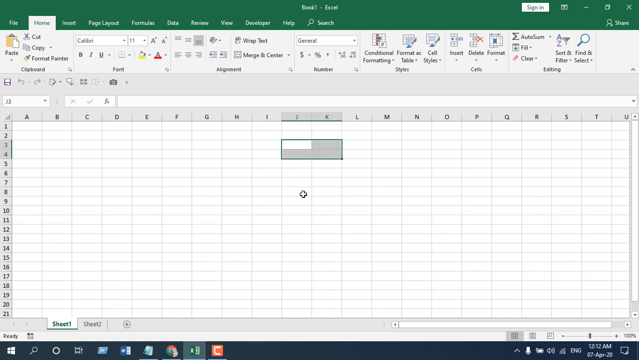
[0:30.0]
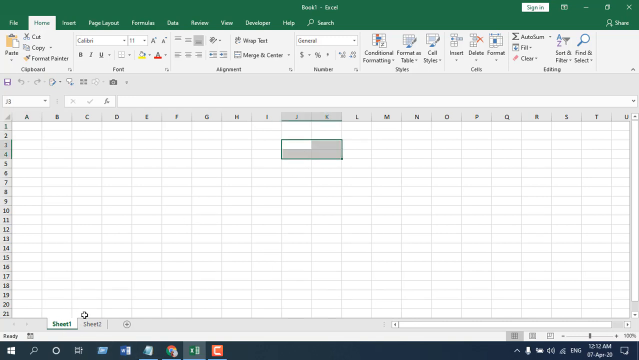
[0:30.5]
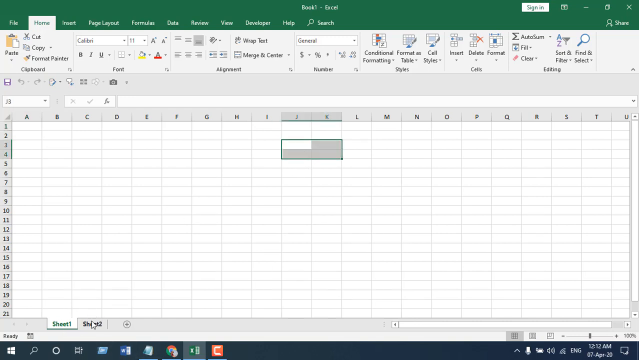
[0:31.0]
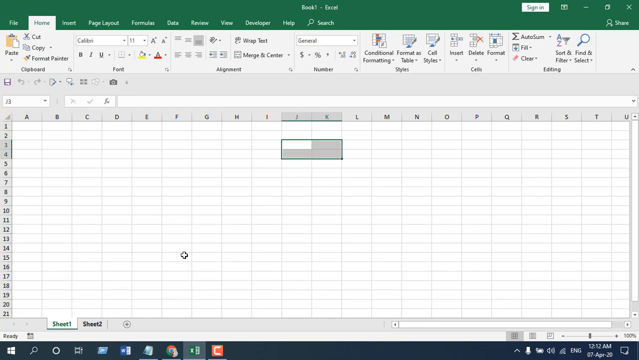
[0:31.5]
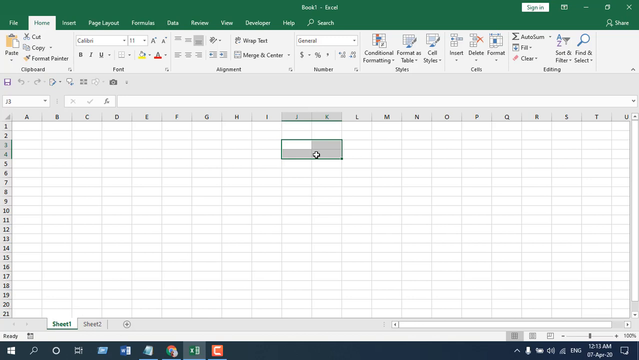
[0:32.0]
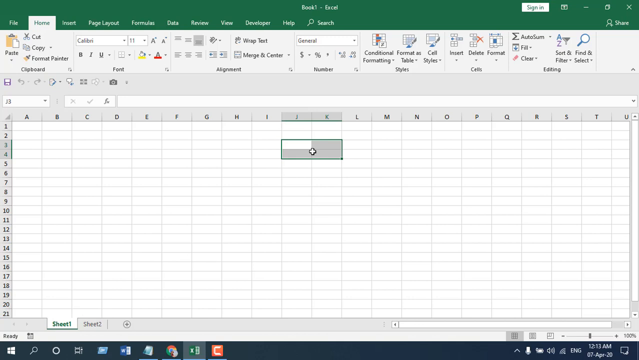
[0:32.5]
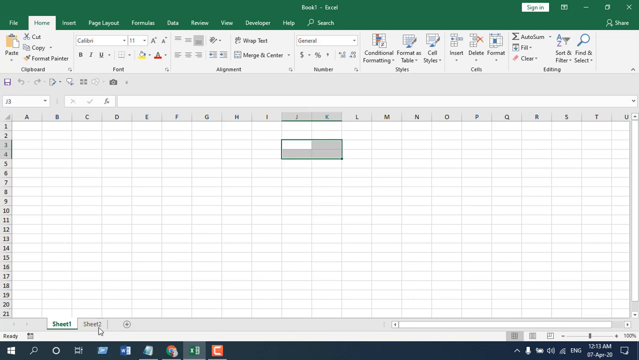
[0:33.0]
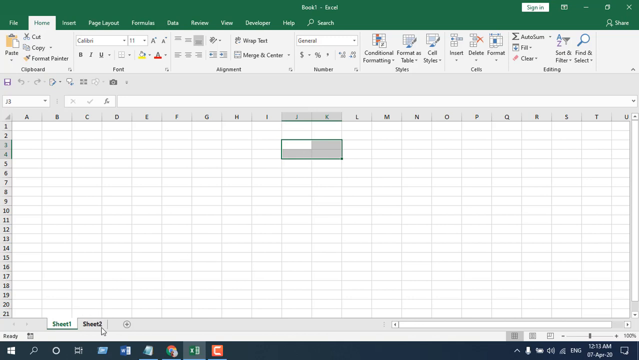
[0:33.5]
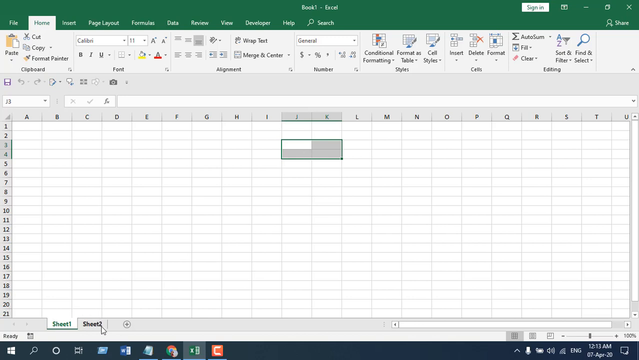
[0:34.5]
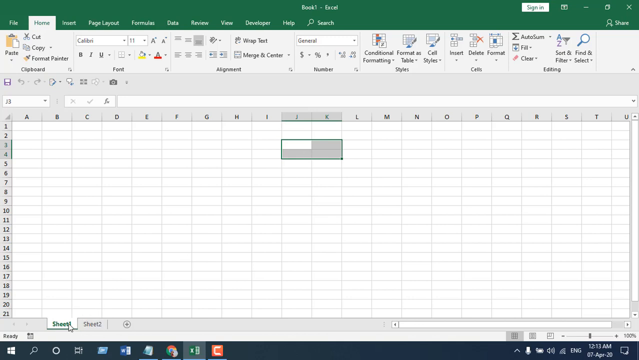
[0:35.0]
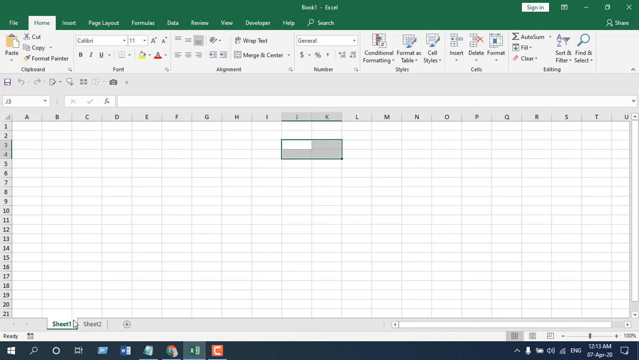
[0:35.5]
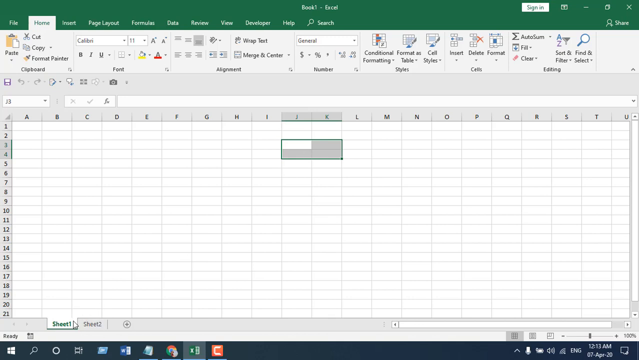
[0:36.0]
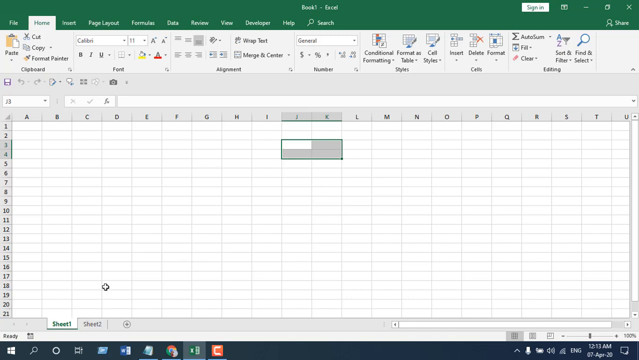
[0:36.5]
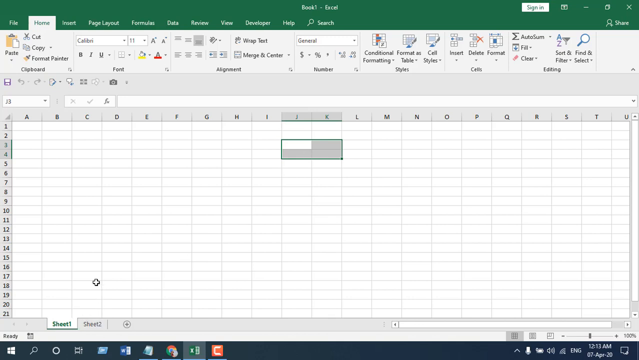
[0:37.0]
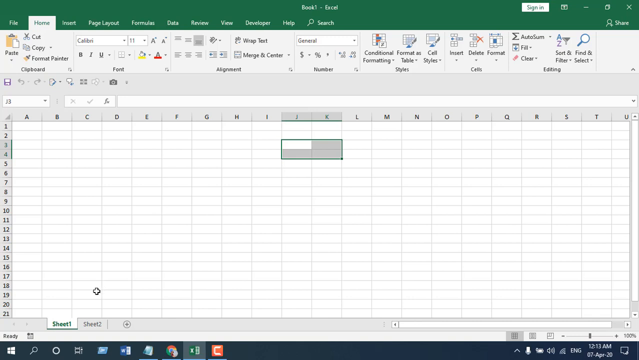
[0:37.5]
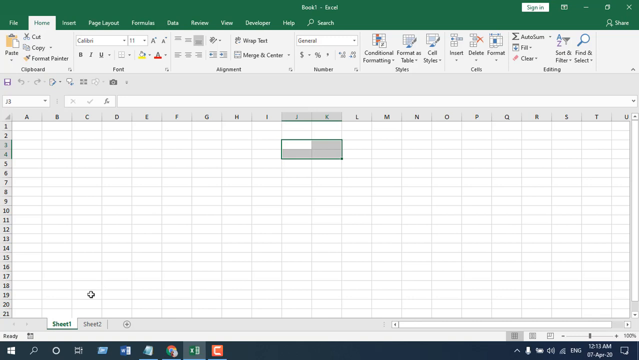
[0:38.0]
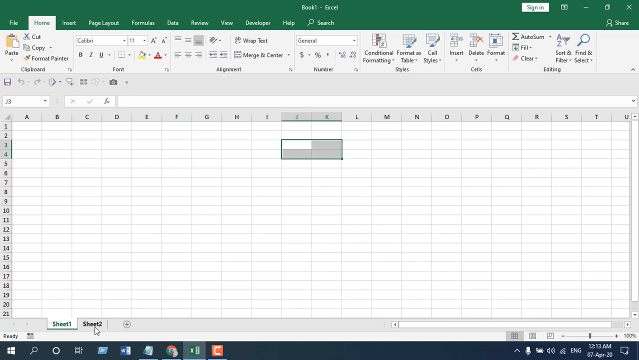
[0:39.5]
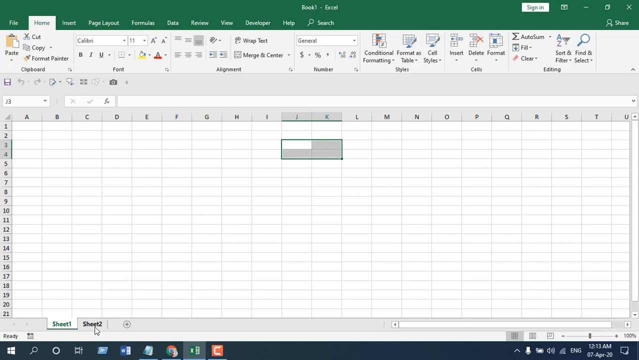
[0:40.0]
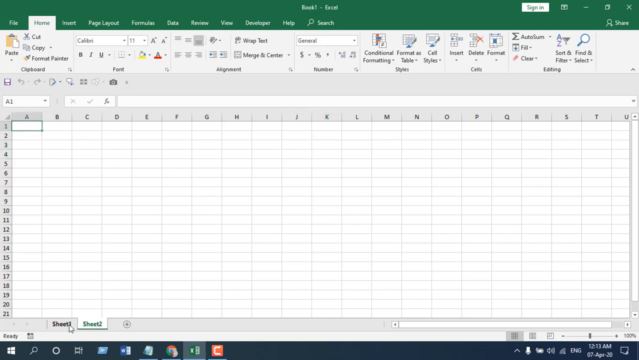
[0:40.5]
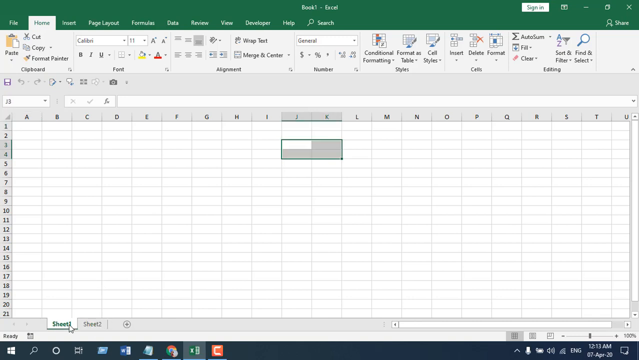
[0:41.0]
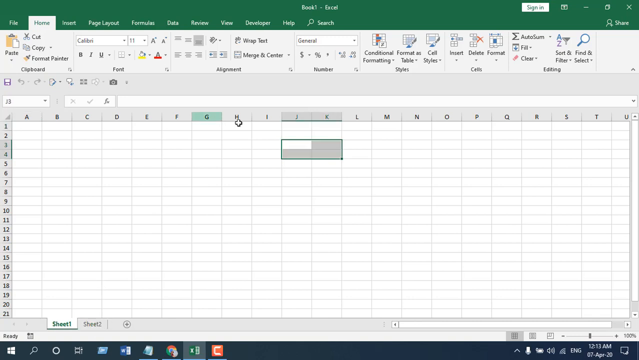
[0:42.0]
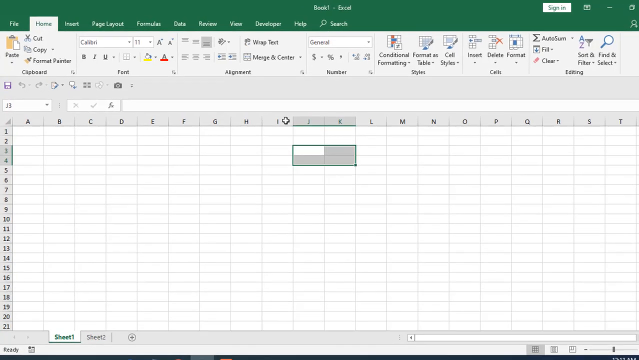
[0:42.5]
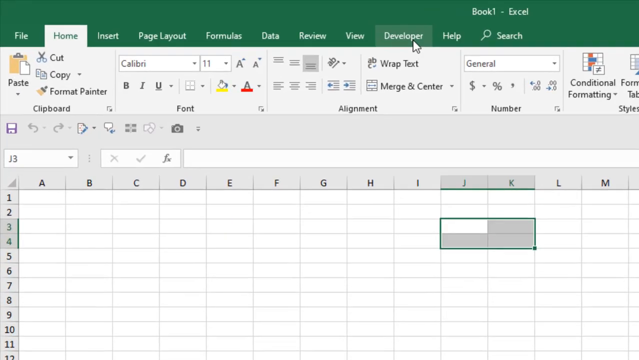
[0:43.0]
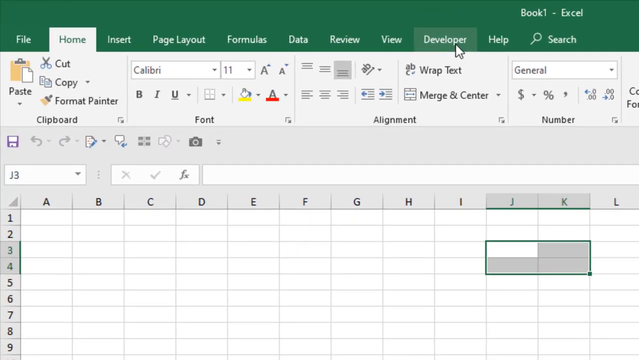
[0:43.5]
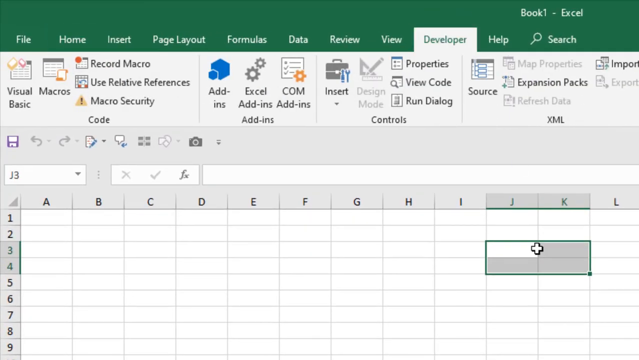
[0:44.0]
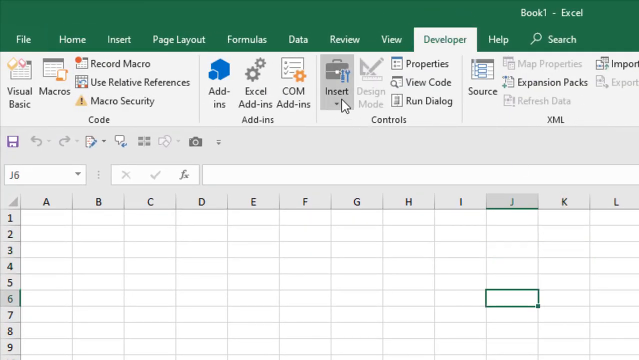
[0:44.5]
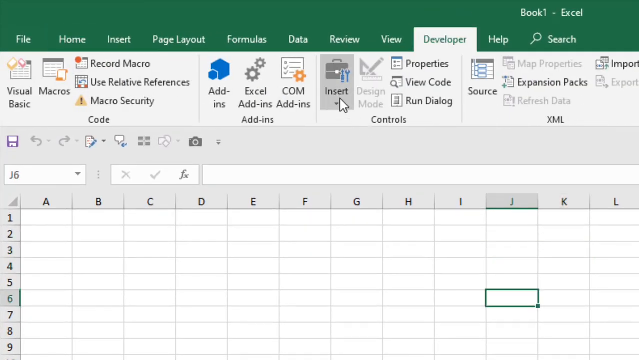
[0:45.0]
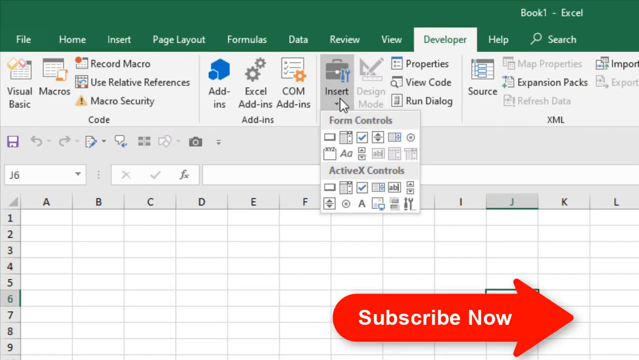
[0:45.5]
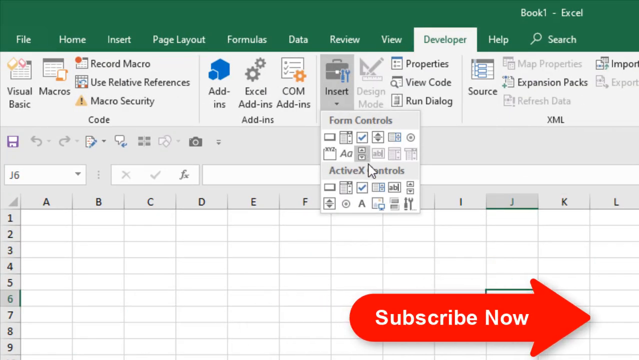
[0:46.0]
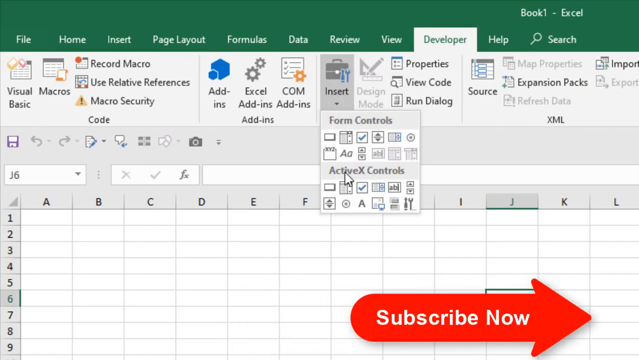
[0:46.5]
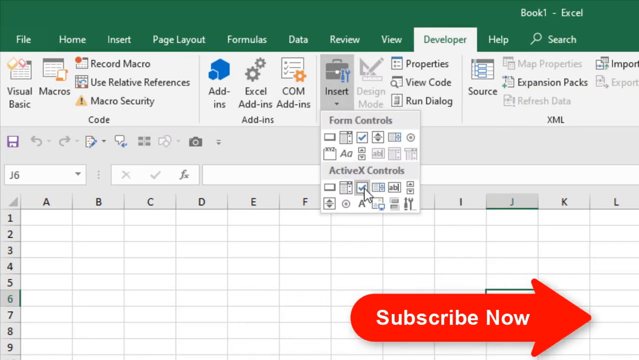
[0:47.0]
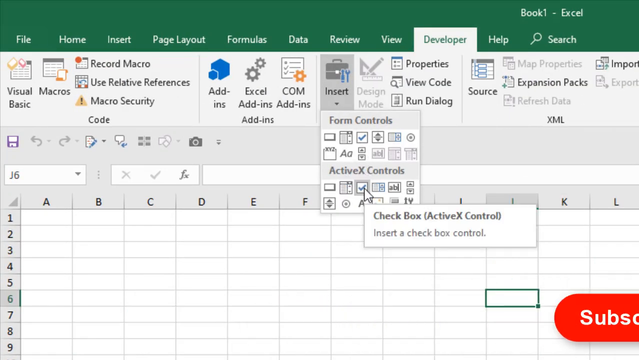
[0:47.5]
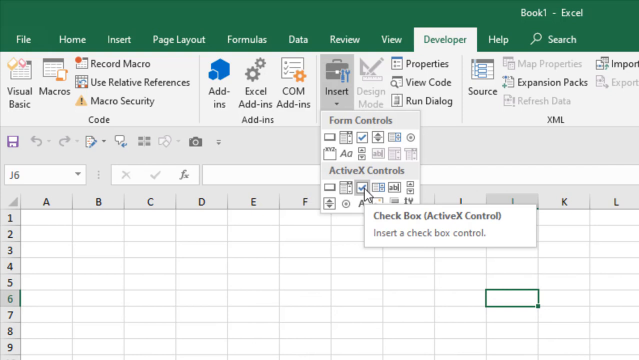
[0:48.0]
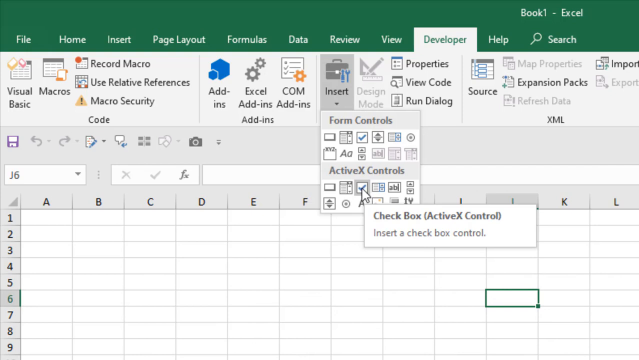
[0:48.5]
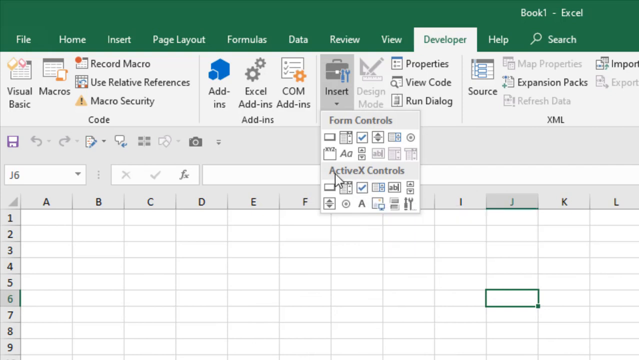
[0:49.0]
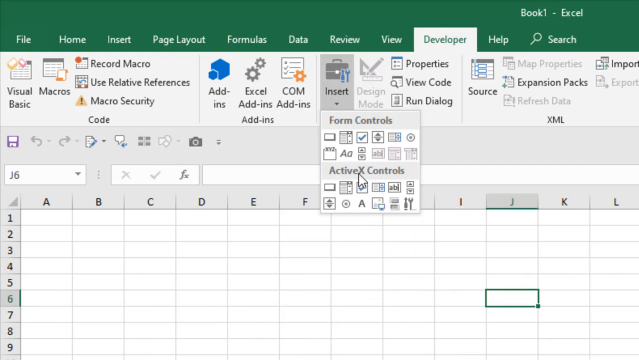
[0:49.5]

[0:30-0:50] A computer screen shows a chart. The green stripe at the top holds the words "File," "Home," "Insert," "Page Layout," "Formula," "Data," "Review," "View," "Developer" and "Help," then a small white magnifying glass and the word "Search." Below, columns run from A to U and rows from 1 to 21, and at the bottom of the chart are the words "Sheet 1" and "Sheet 2." The person with the mouse moves it over "Sheet 1" and clicks, then over "Sheet 2" and clicks. He then zooms in, moves the mouse onto a tab at the top of the screen labeled "Insert," and clicks it.